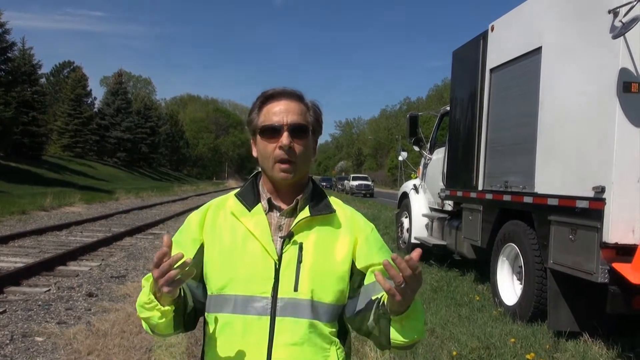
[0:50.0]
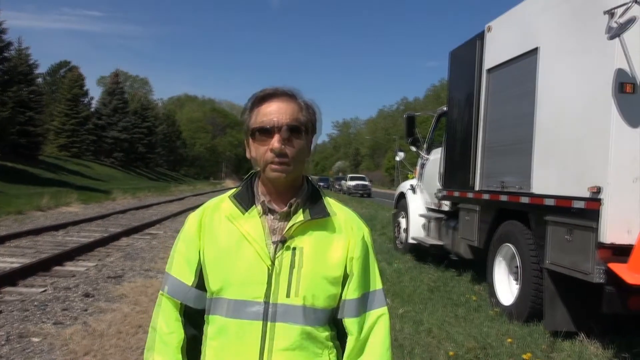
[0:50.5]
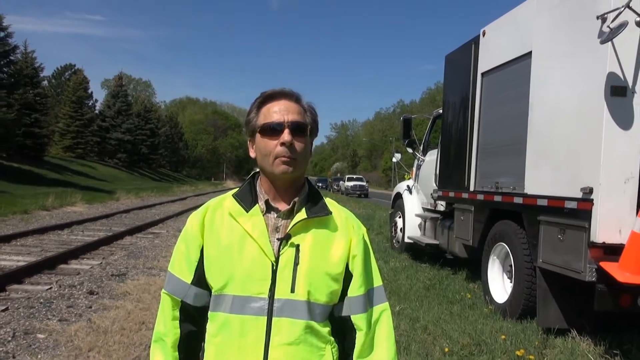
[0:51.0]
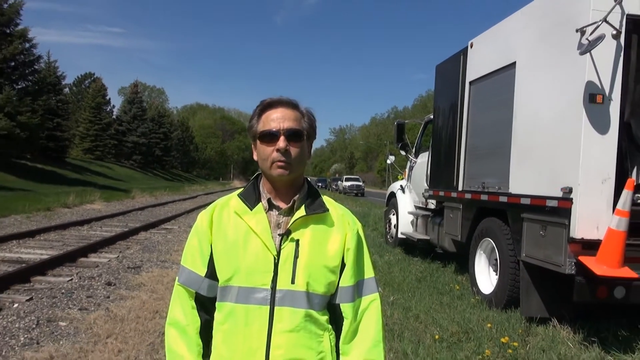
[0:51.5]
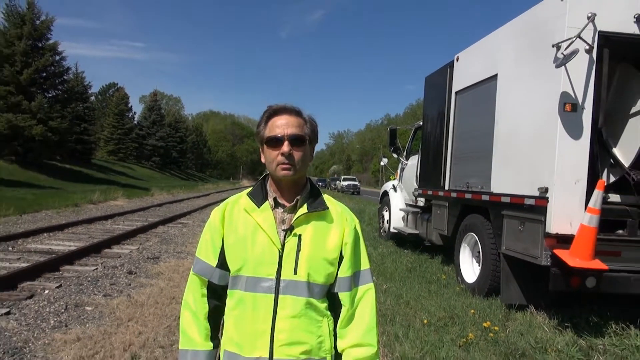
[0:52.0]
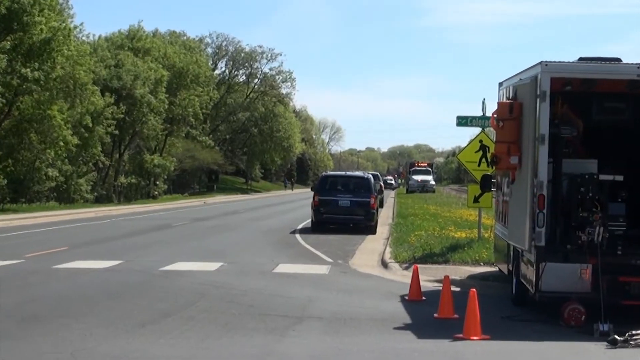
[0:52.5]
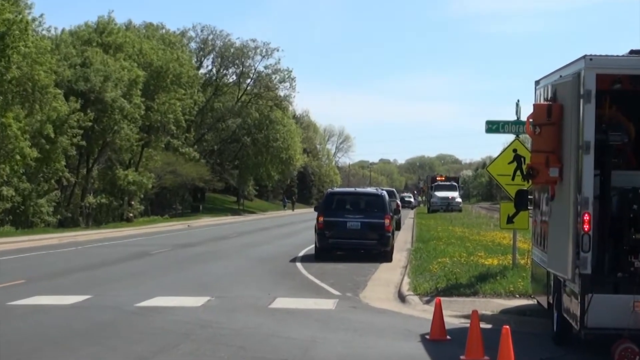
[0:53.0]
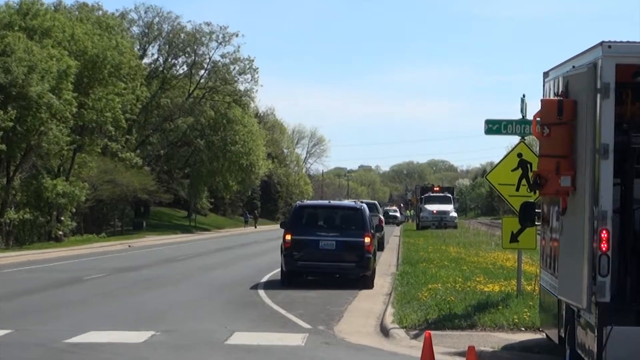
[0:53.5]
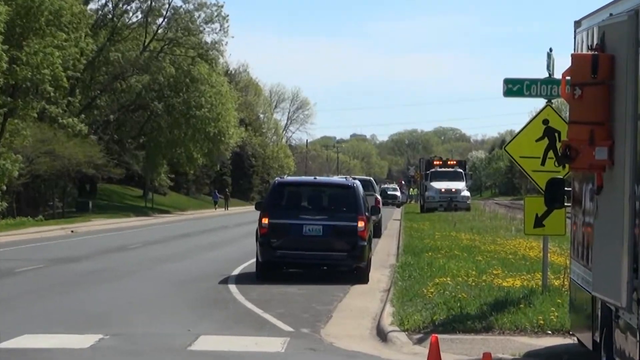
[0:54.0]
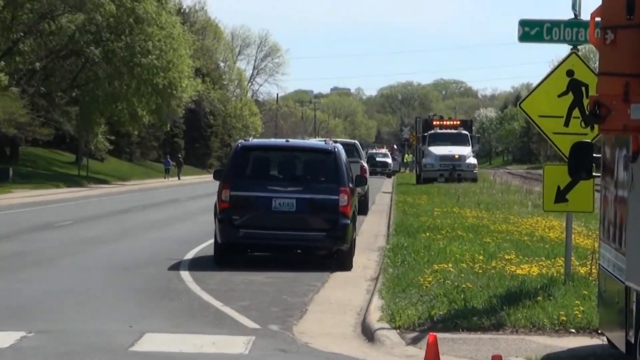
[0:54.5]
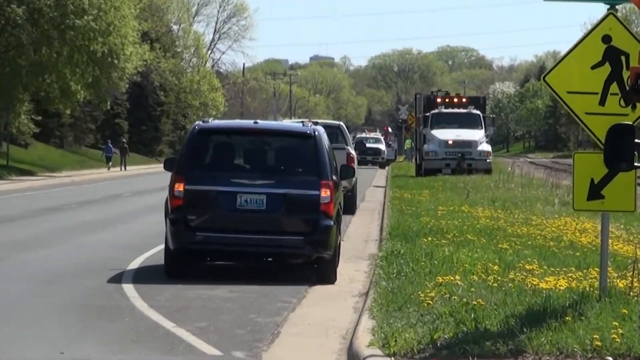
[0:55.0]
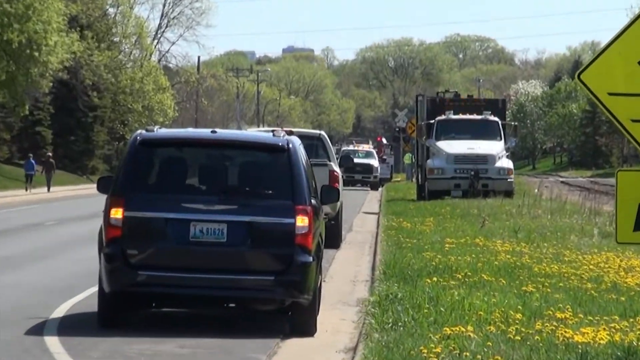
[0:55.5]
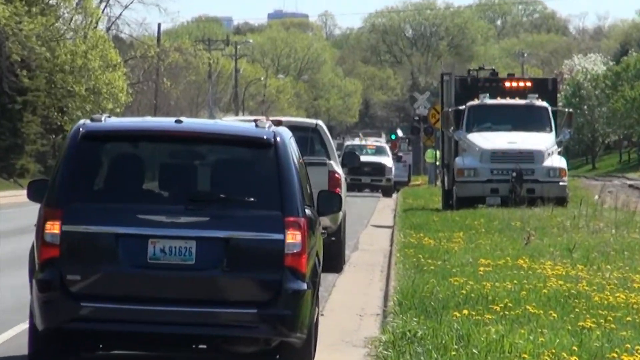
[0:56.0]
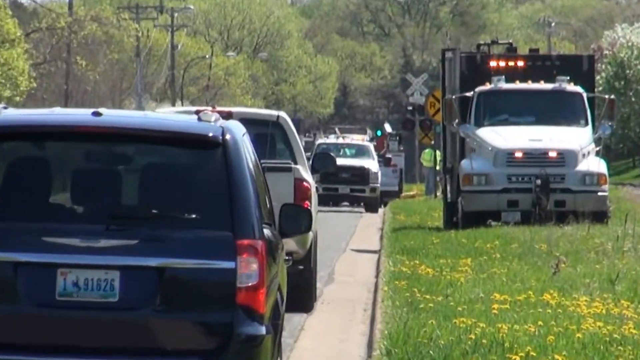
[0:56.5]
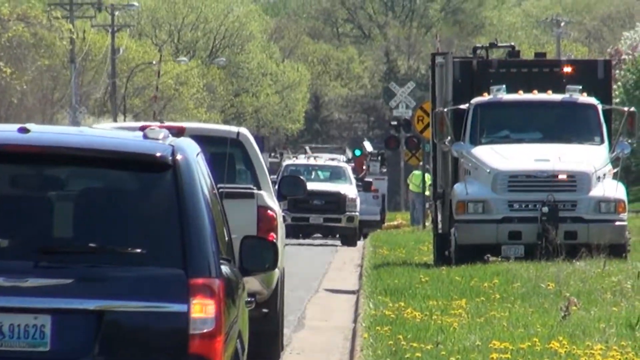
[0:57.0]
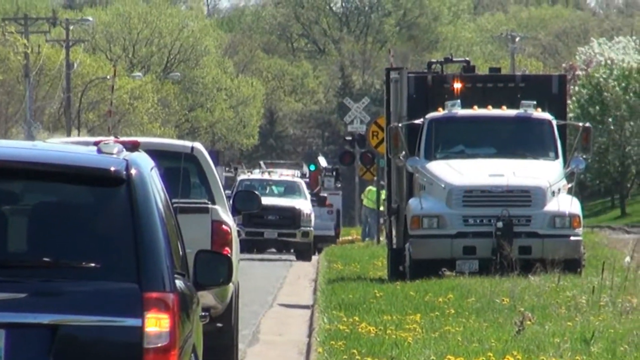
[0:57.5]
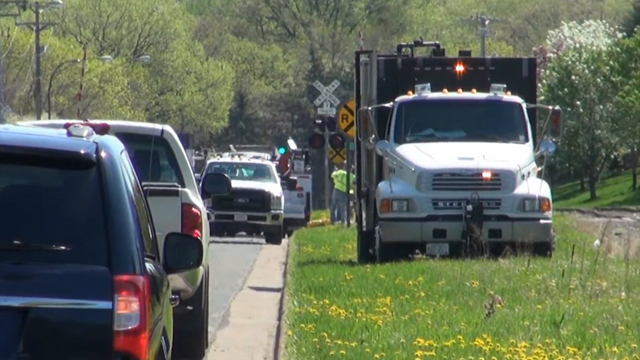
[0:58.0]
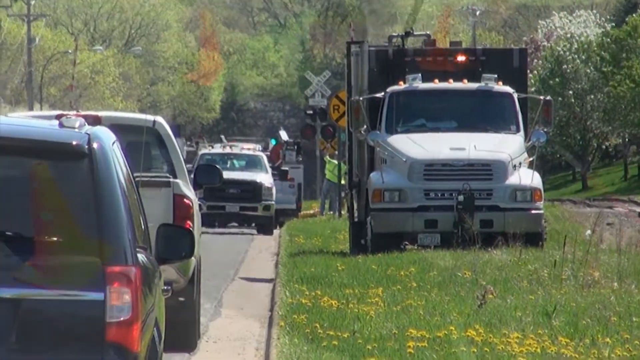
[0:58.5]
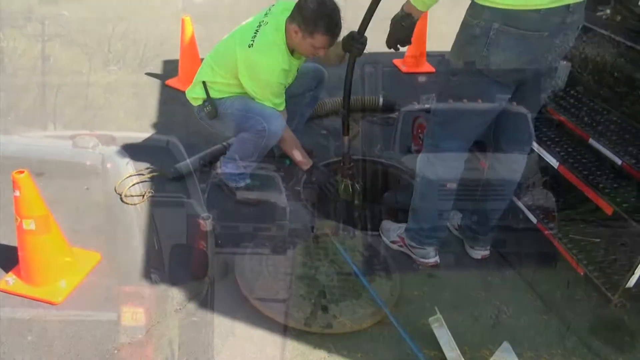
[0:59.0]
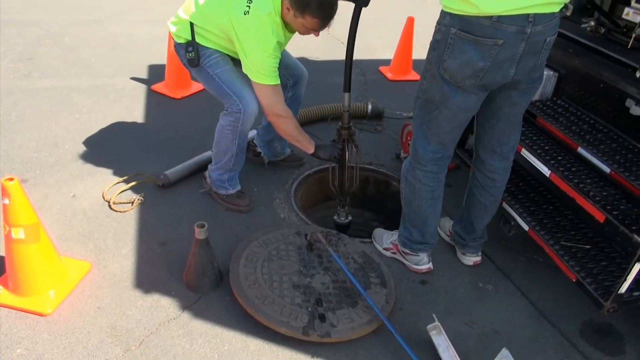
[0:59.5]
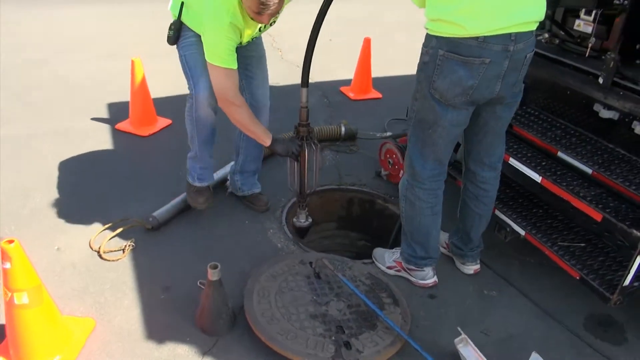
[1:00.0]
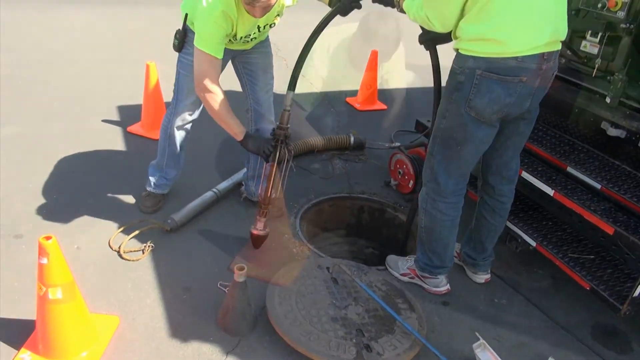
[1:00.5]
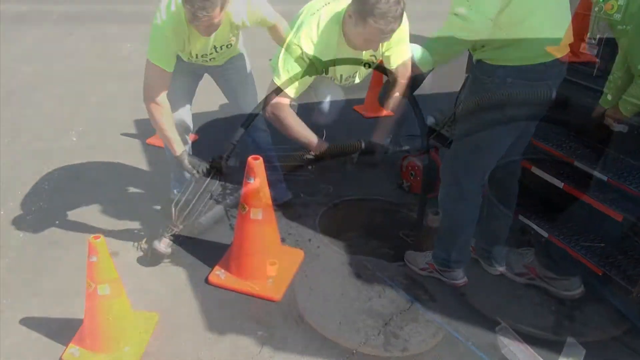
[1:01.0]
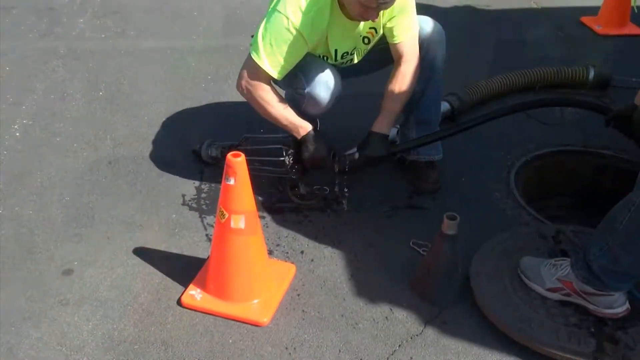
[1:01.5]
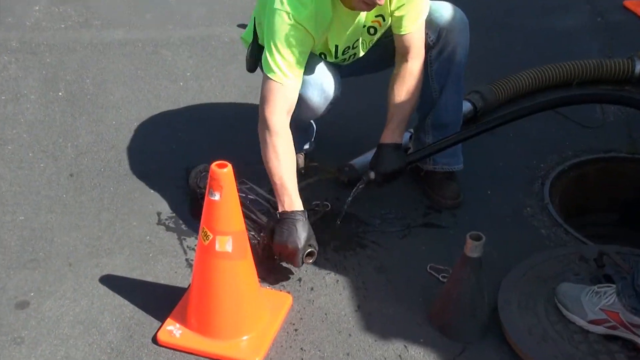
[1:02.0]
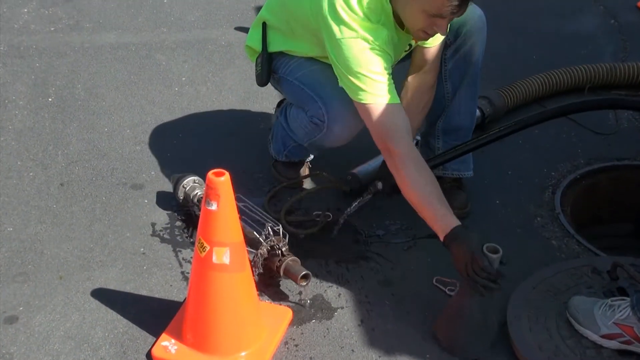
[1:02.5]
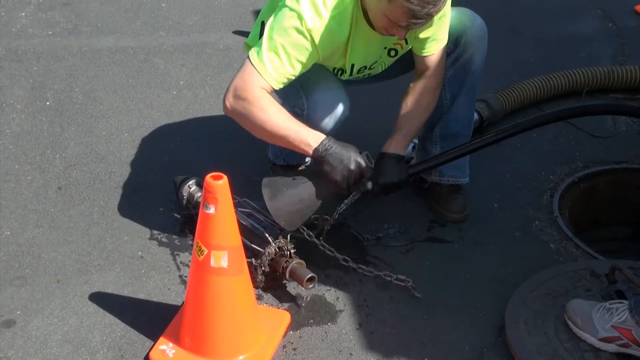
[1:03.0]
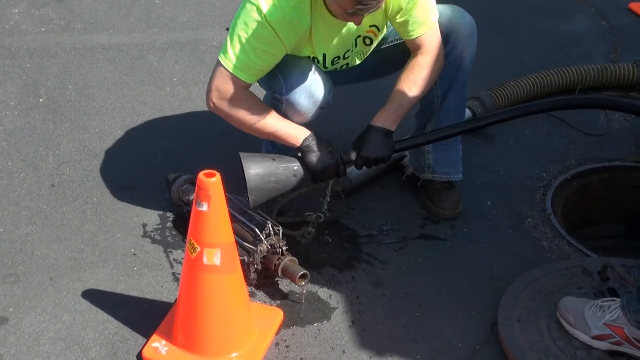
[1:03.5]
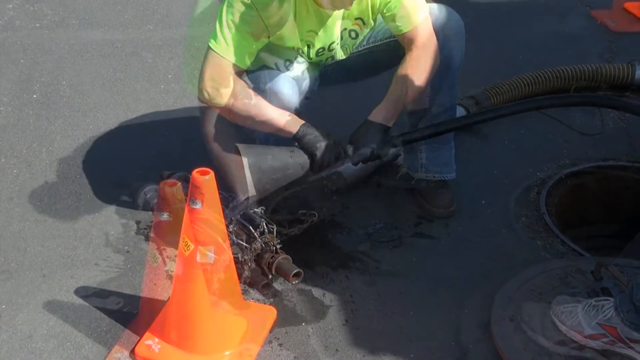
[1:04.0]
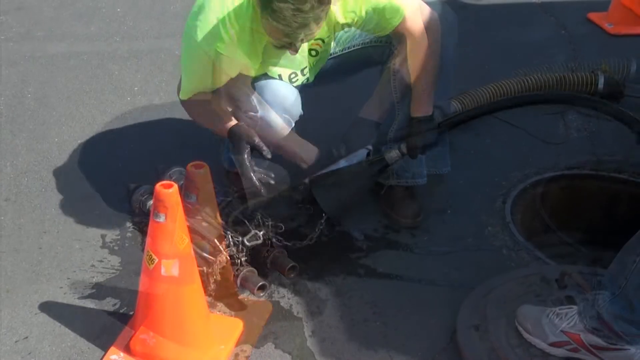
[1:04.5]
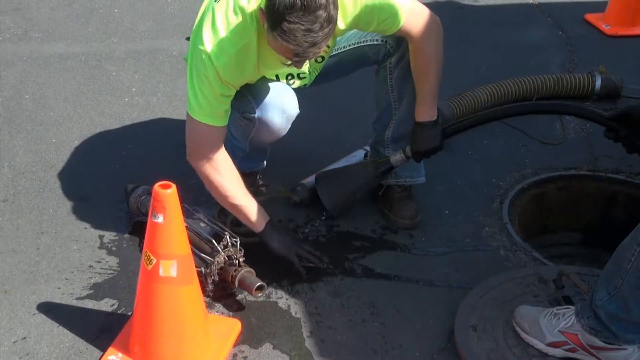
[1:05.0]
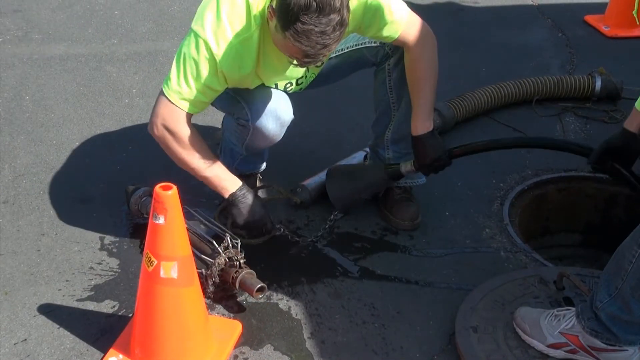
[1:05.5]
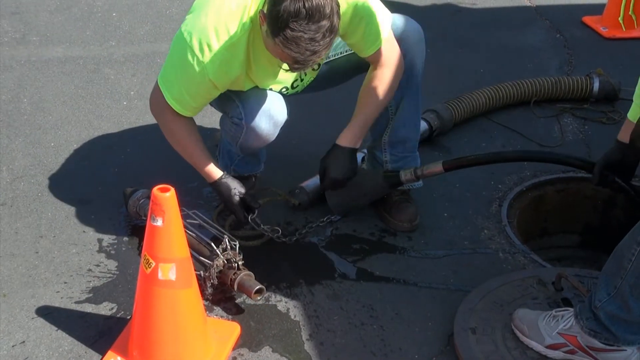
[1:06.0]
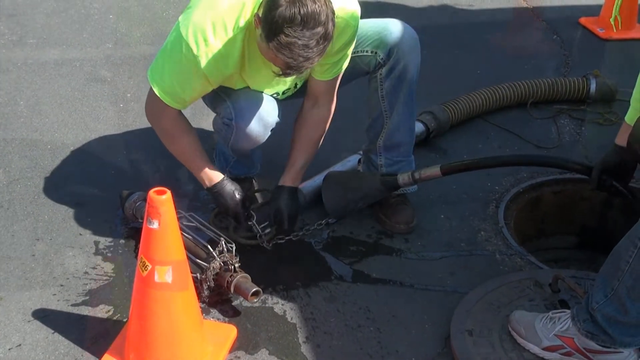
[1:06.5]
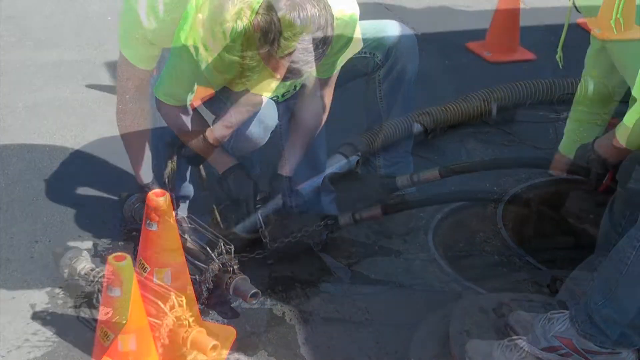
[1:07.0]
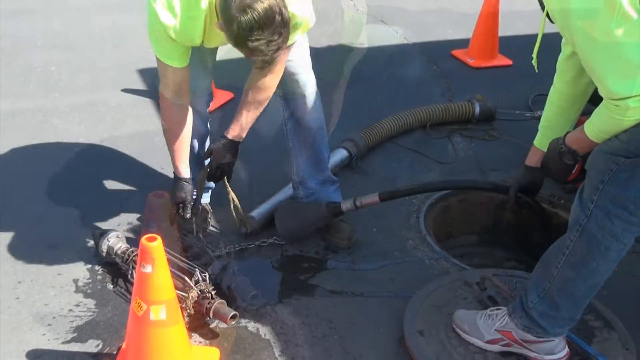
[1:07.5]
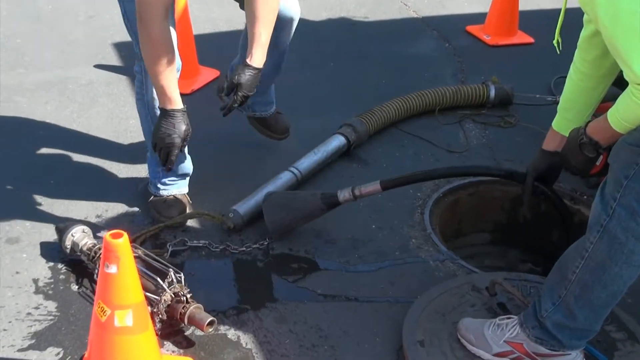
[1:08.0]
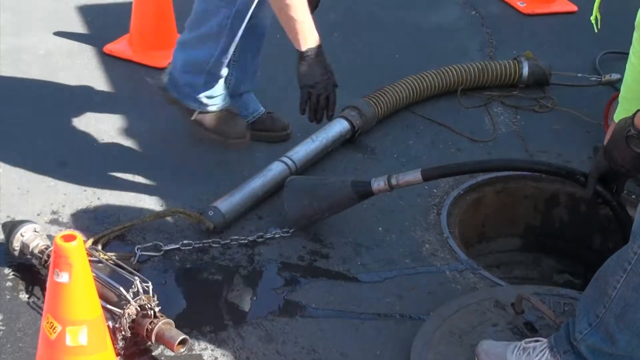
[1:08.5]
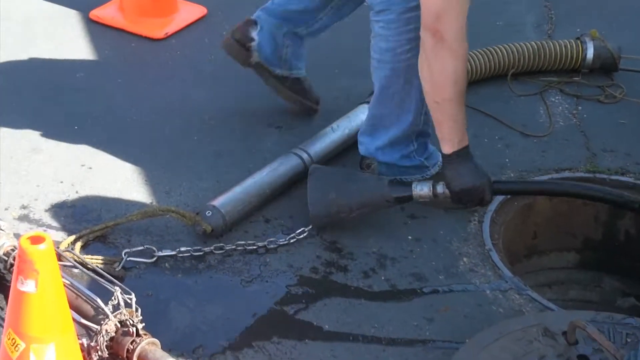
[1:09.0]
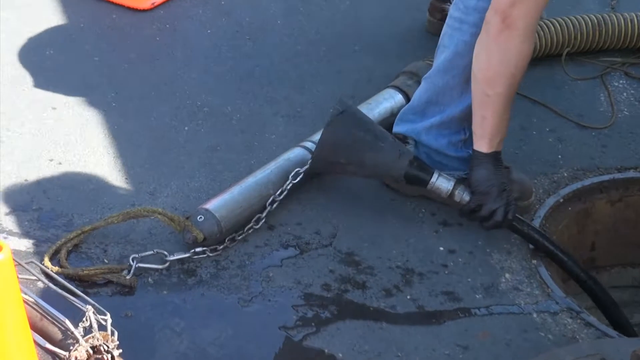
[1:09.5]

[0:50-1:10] Mr. Tracy's interview by the railroad tracks continues, with blue skies, a lot of trees, big white trucks, and trucks in the background; he wears sunglasses. The video then shows the trees and the road and a green and white sign, apparently a street sign. A bunch of trucks are parked along the side, and the camera pans close to one of the trucks along the railroad track, which has flashing lights. Some buildings are visible in the far background above the trees. A few other workers are out there in neon green shirts or smocks. Then someone is shown working in the sewer line, possibly cleaning it out. One person wears white and red sneakers, and both wear blue jeans. He is hooking up something with a chain.